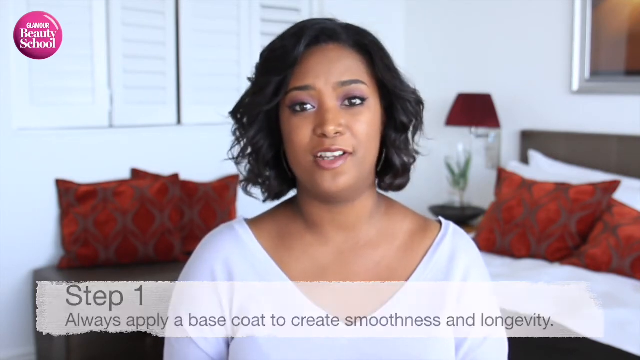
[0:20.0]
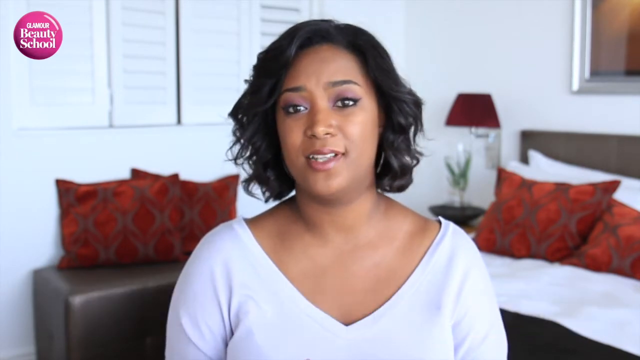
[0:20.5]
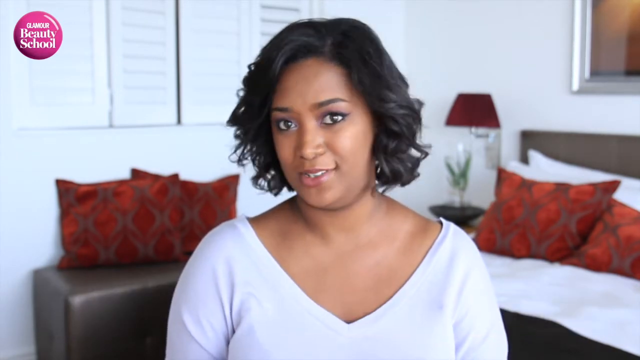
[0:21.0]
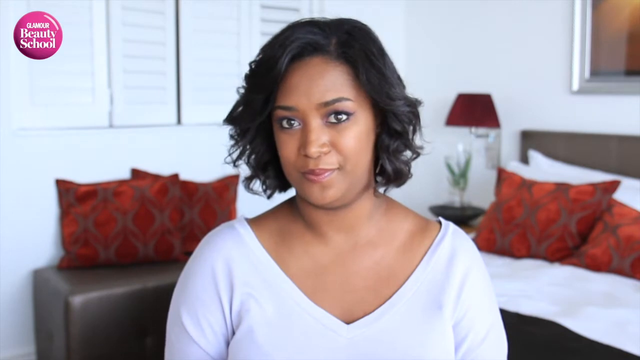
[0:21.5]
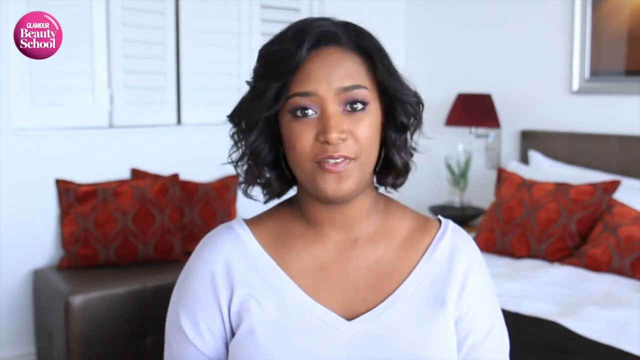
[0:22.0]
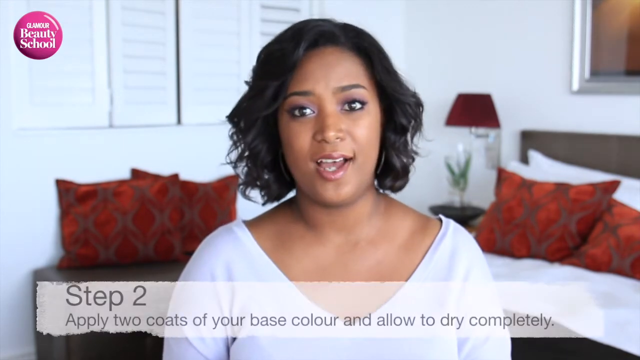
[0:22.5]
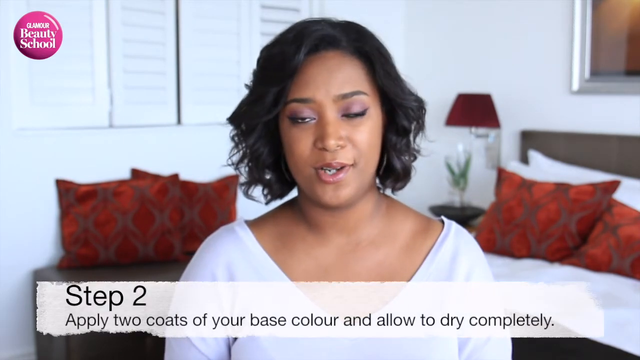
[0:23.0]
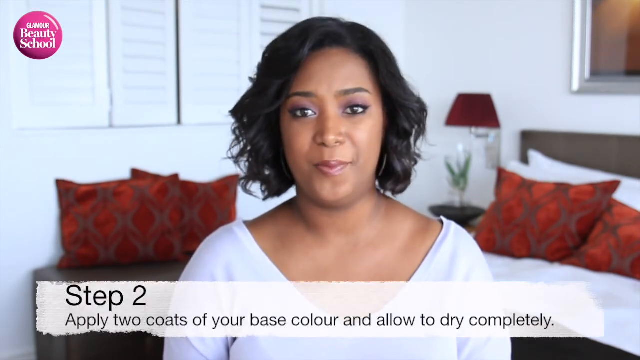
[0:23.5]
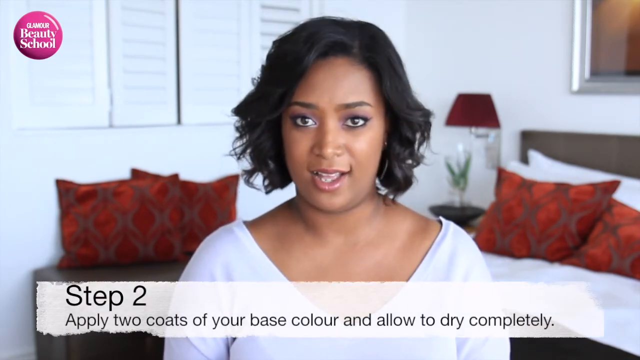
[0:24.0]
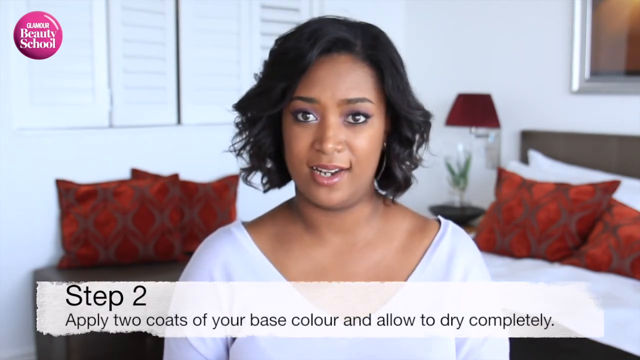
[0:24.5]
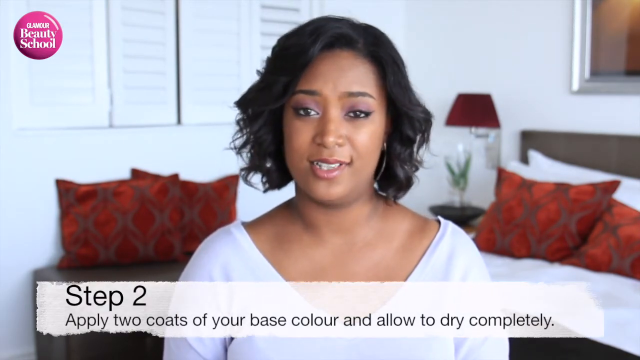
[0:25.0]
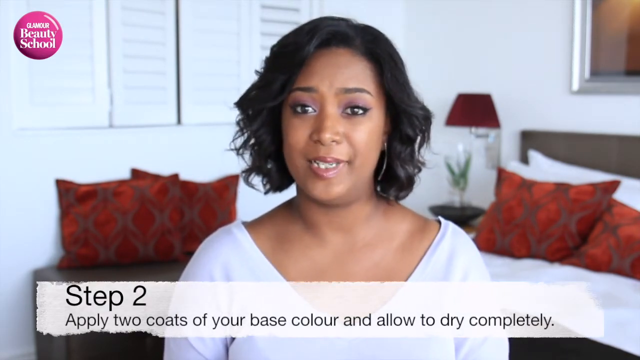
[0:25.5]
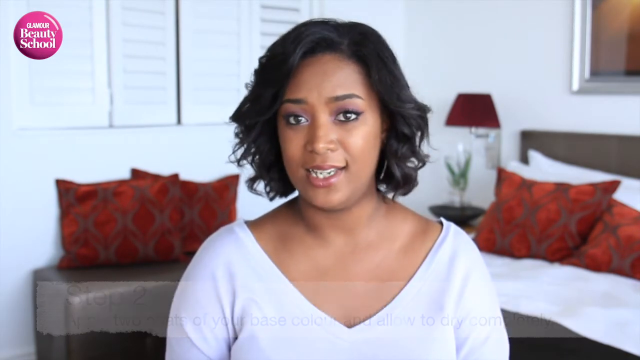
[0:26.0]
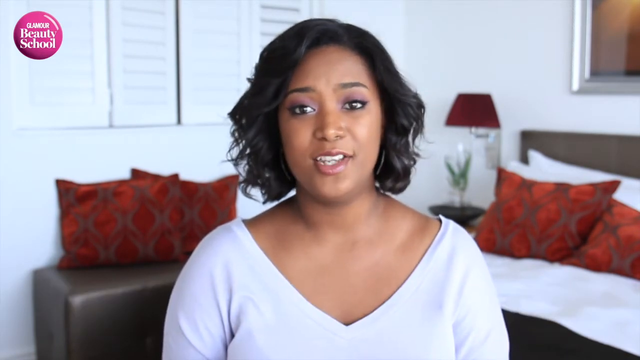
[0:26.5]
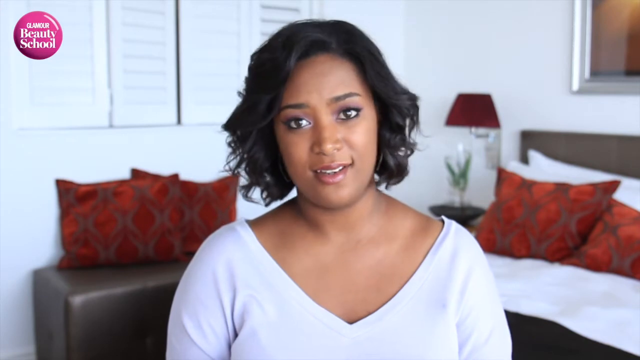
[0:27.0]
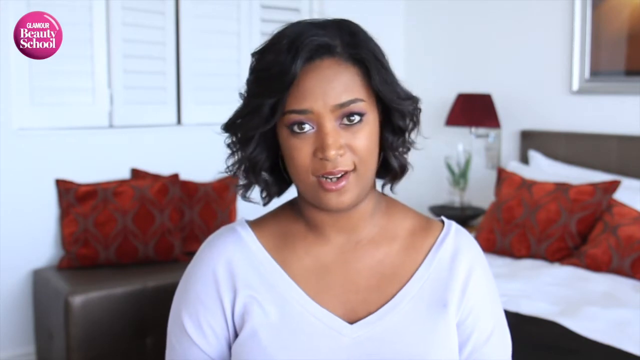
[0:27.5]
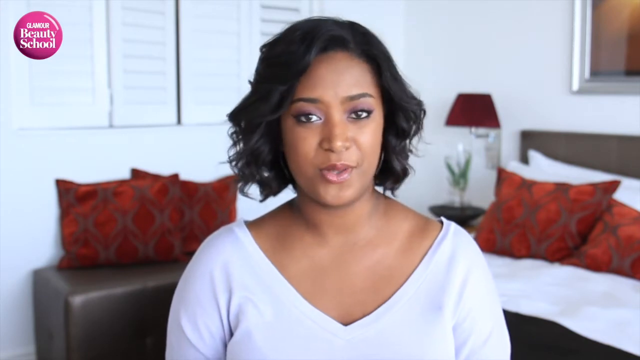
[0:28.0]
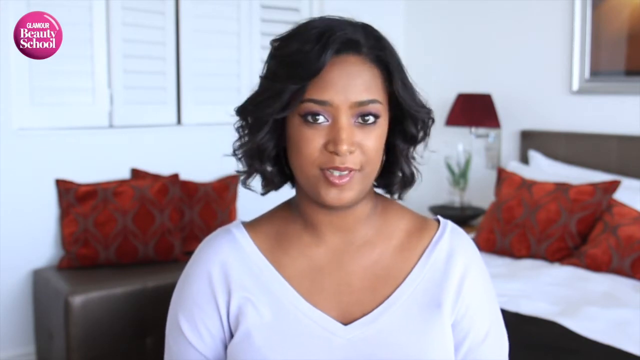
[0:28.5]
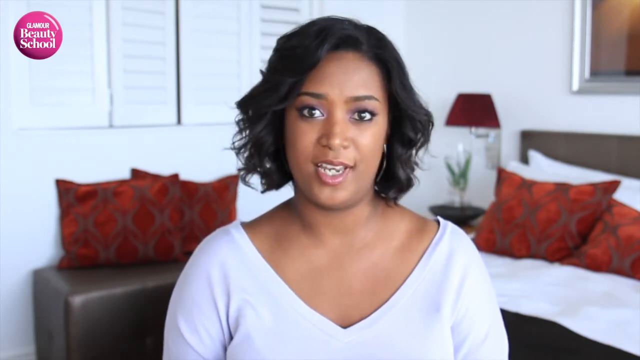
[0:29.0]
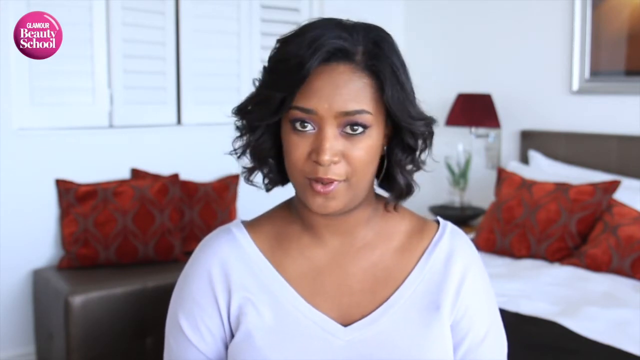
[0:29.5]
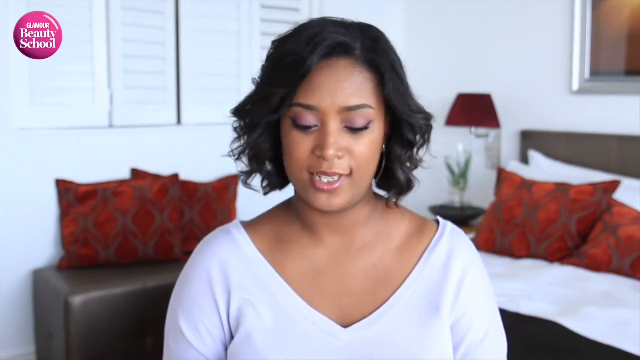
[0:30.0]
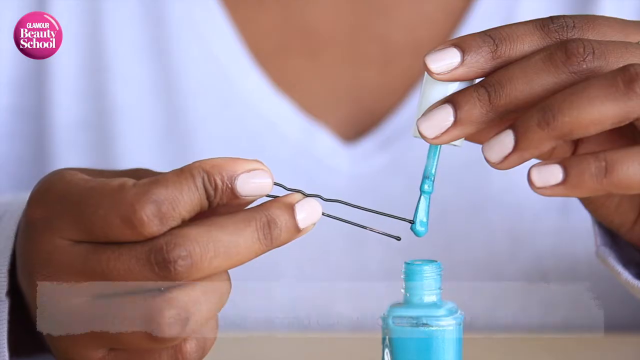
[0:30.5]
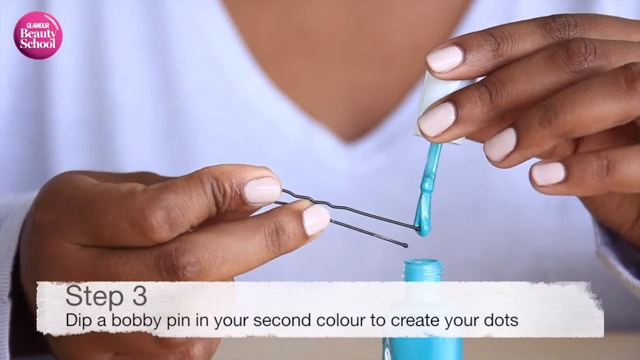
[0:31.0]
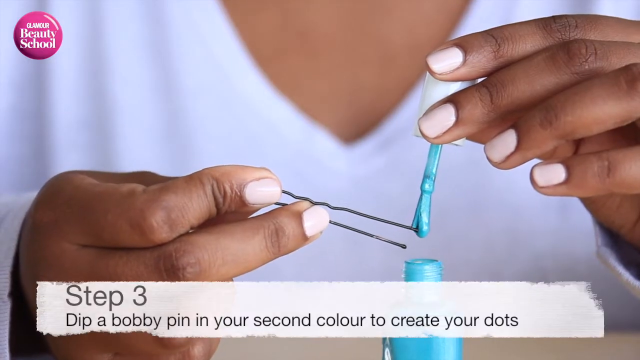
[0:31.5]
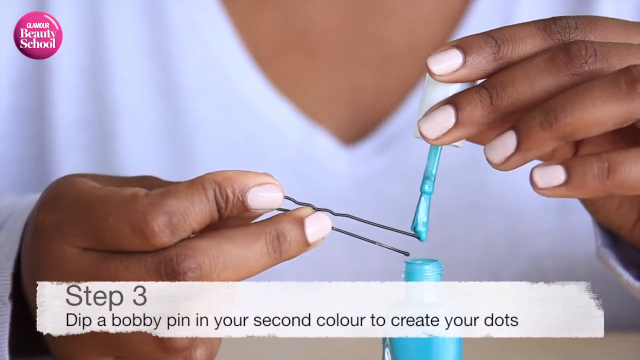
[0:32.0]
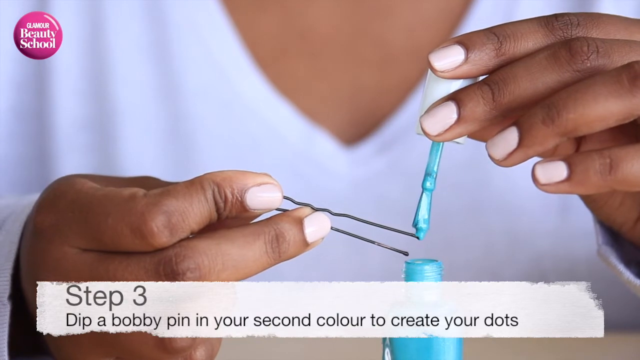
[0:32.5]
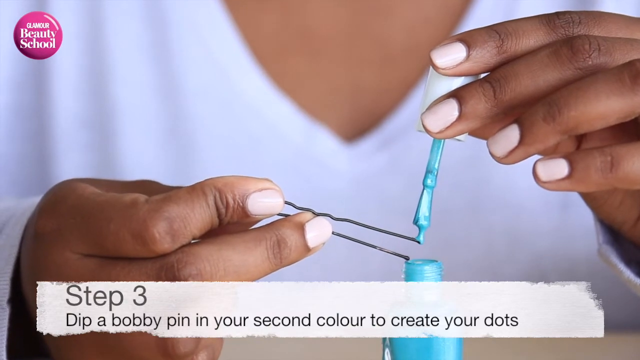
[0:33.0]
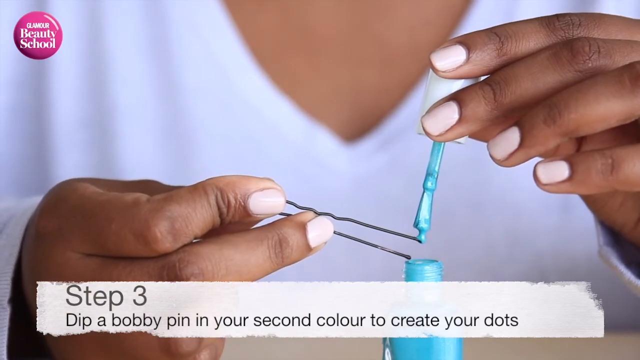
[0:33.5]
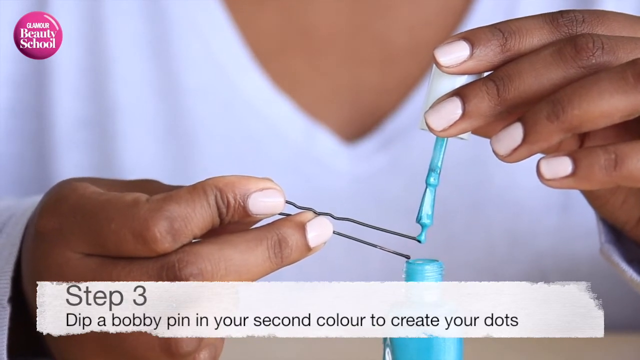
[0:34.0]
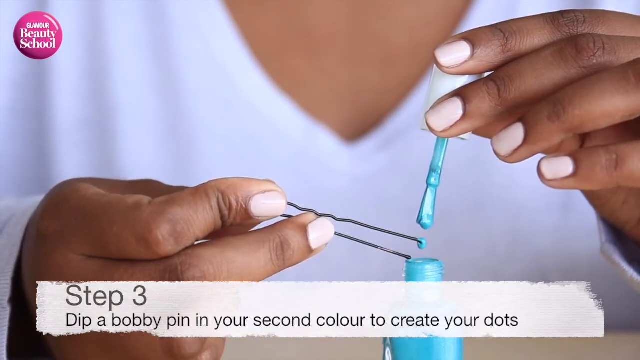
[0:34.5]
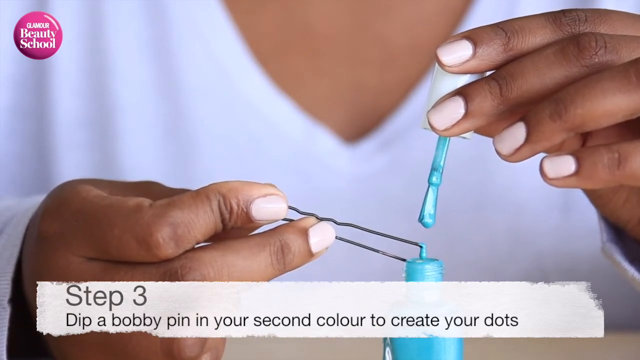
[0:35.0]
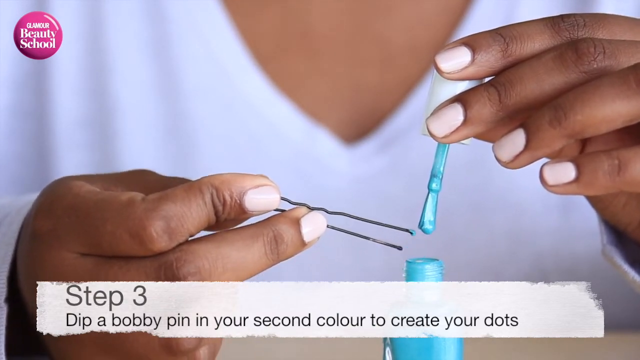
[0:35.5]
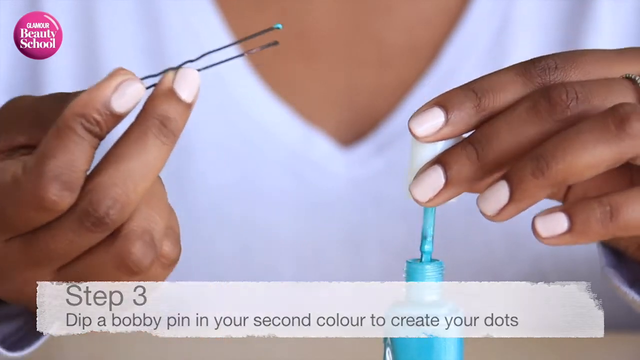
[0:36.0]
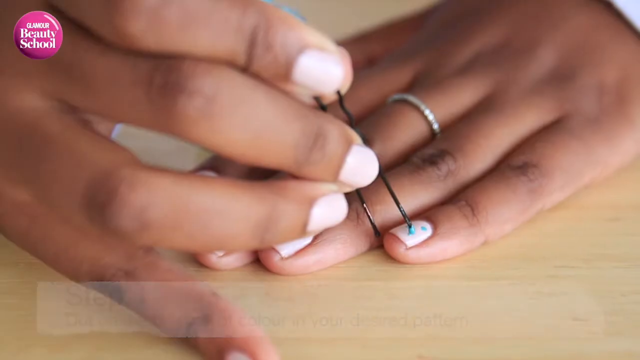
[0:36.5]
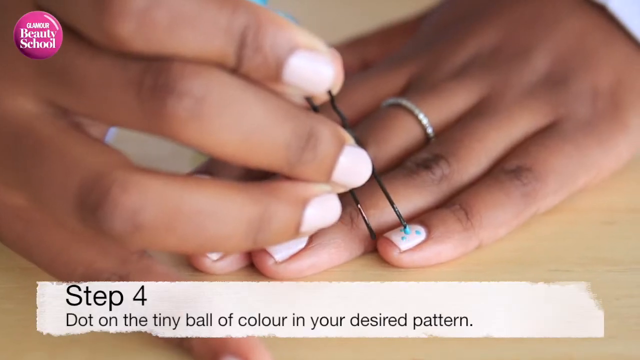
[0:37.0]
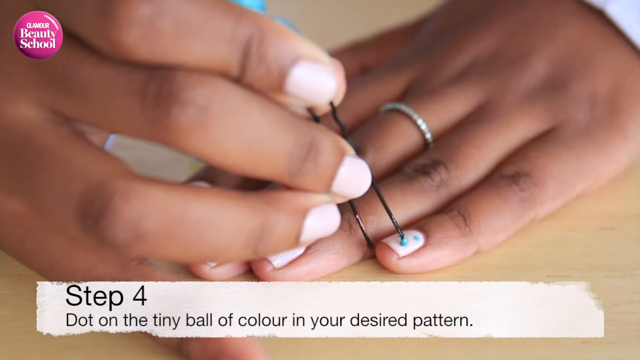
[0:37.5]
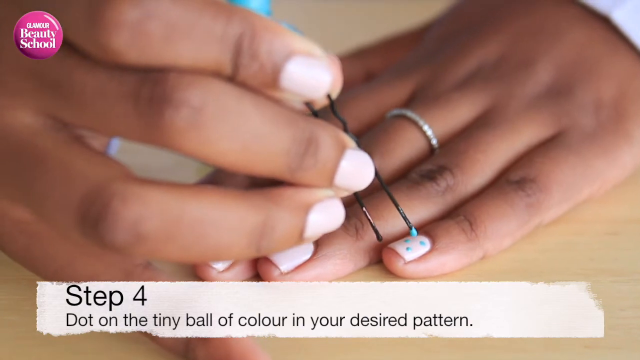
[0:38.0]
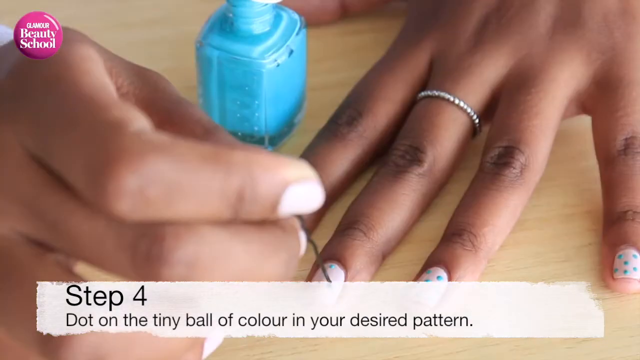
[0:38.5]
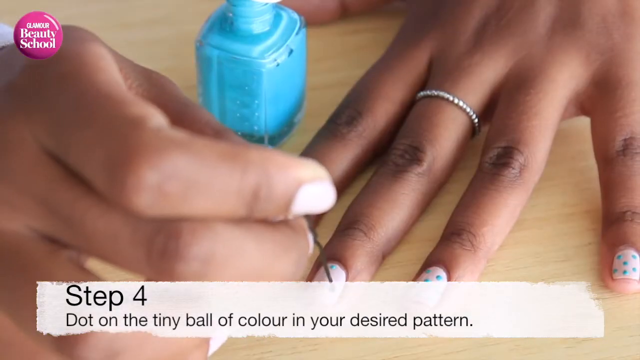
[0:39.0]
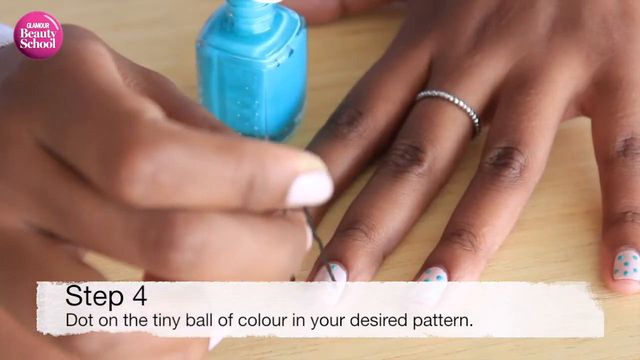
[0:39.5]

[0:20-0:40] Leslie Mathis, a Glamour magazine staffer and makeup artist, continues speaking into the camera. Text at the bottom of the screen gives step two: "apply two coats of your base color and allow to dry completely." The bed with throw pillows and the lamp remain in the background. She then moves on to step three, and the text at the very bottom of the screen reads: "dip a bobby pin in your second color to create your dots." Leslie has light pink nail polish on her nails, and she takes a bobby pin and dips it into a bright turquoise bottle of nail polish. Her fingernails are prominently featured.